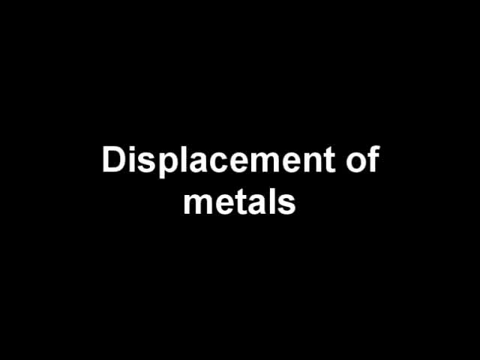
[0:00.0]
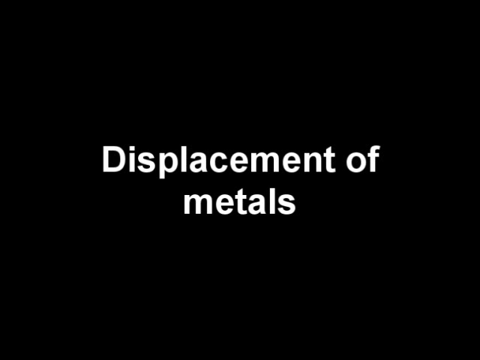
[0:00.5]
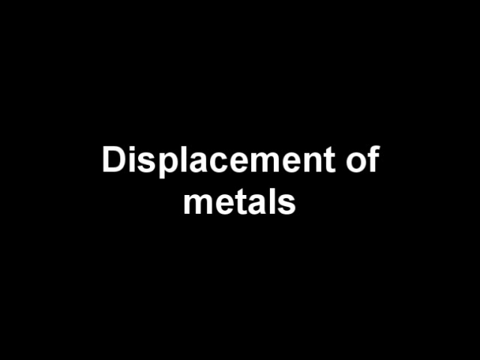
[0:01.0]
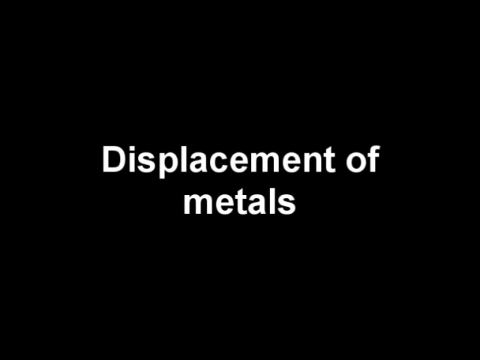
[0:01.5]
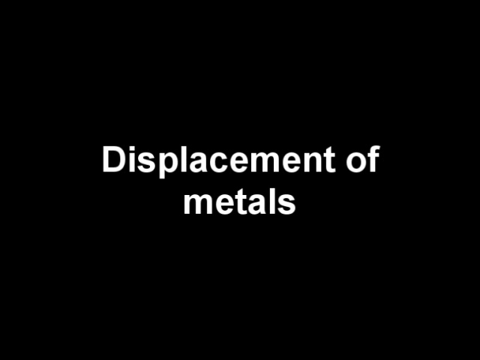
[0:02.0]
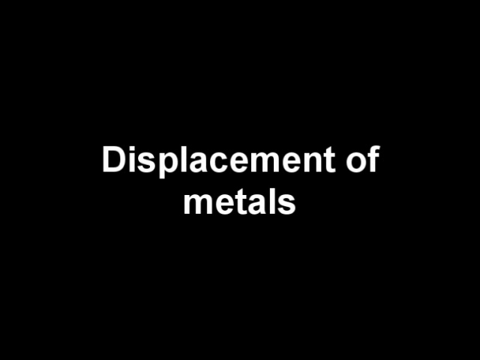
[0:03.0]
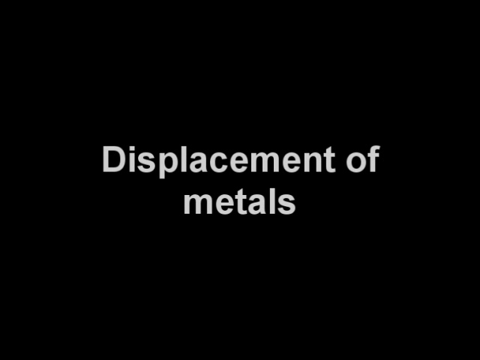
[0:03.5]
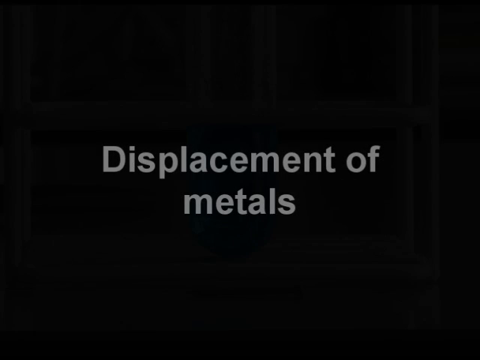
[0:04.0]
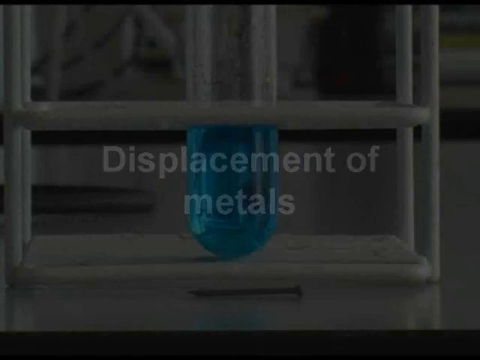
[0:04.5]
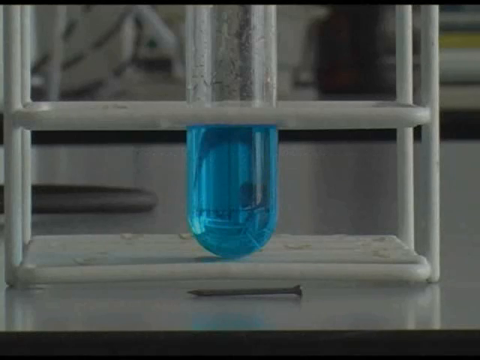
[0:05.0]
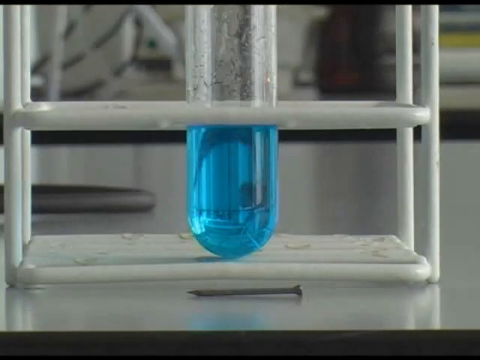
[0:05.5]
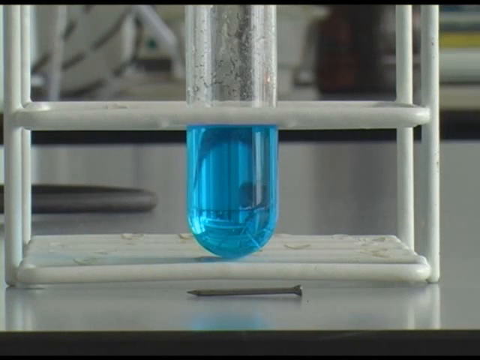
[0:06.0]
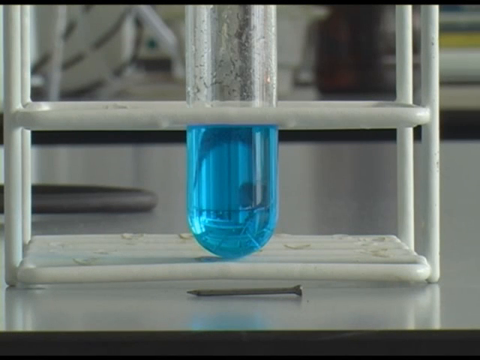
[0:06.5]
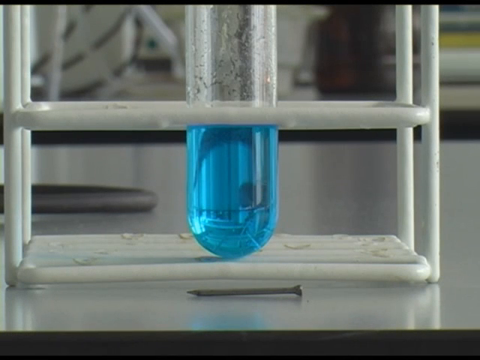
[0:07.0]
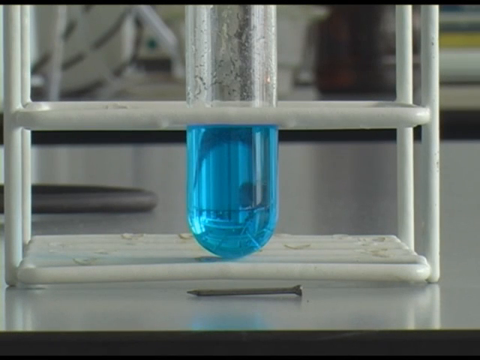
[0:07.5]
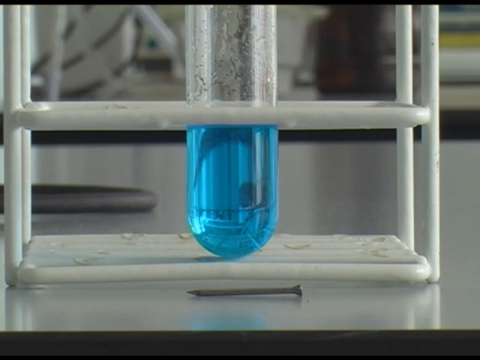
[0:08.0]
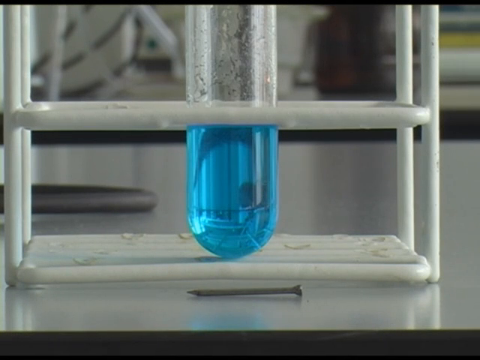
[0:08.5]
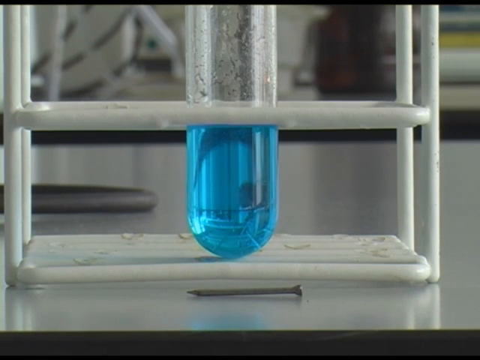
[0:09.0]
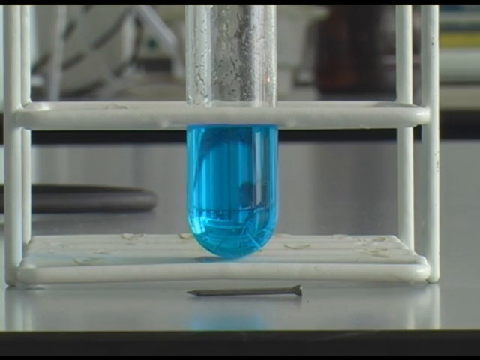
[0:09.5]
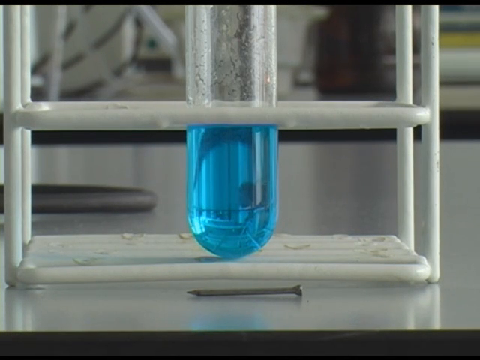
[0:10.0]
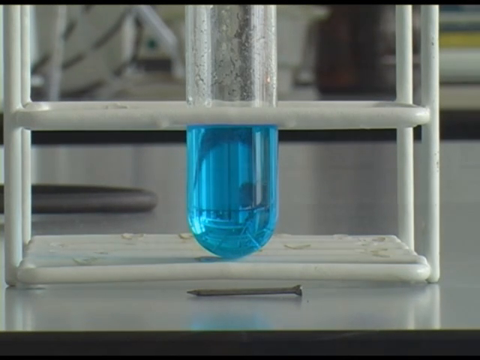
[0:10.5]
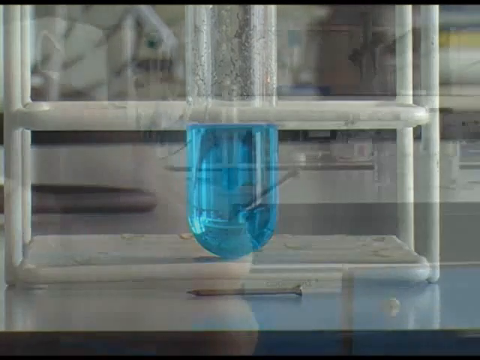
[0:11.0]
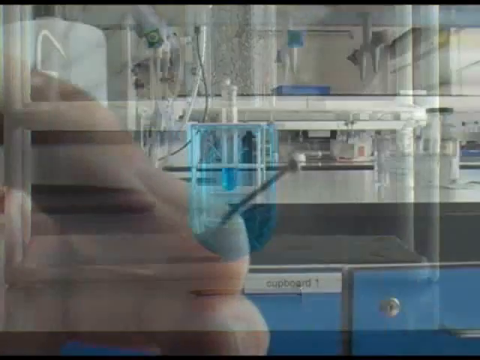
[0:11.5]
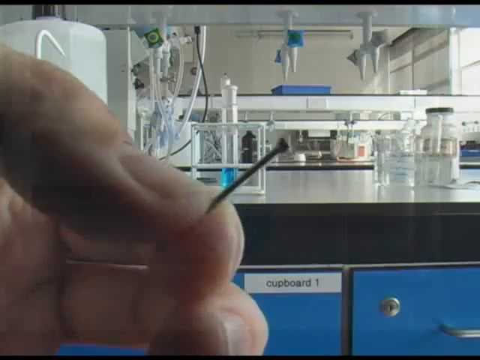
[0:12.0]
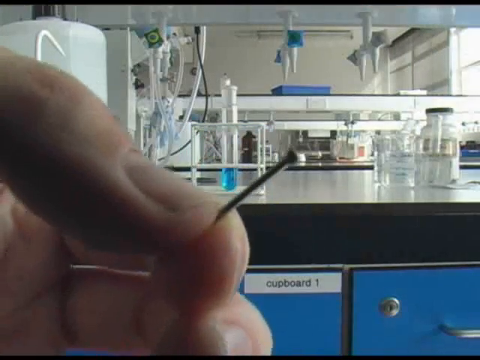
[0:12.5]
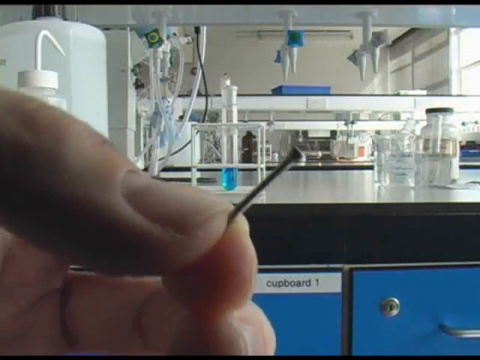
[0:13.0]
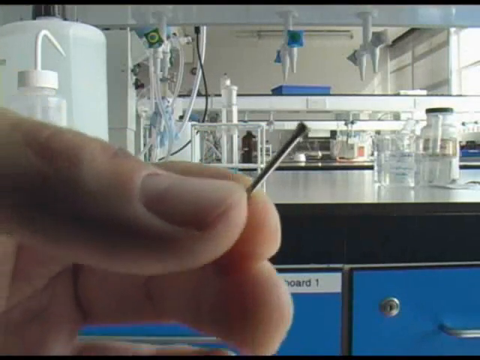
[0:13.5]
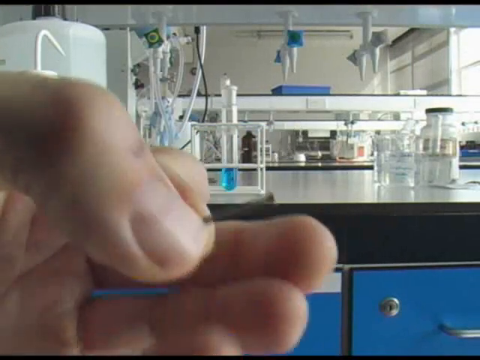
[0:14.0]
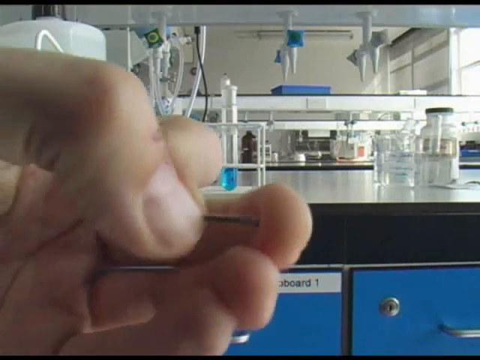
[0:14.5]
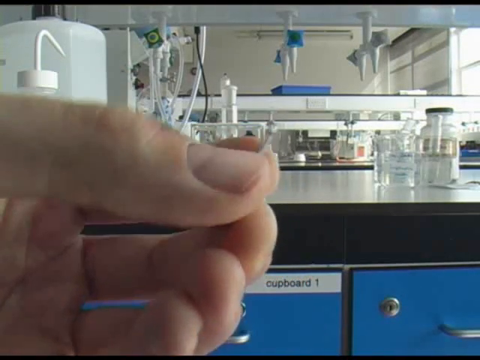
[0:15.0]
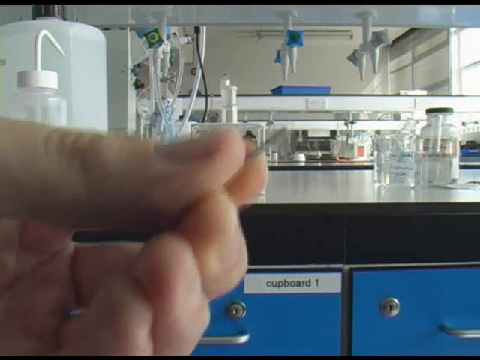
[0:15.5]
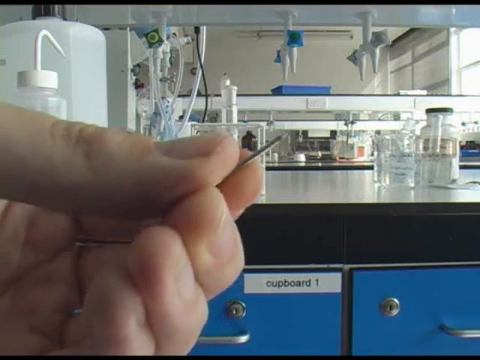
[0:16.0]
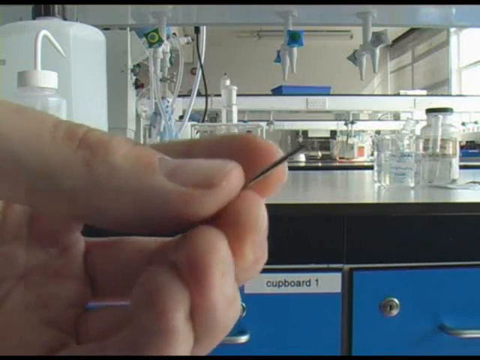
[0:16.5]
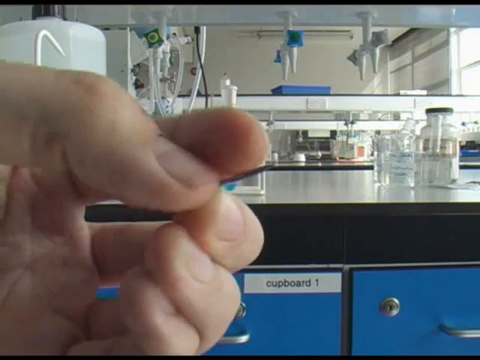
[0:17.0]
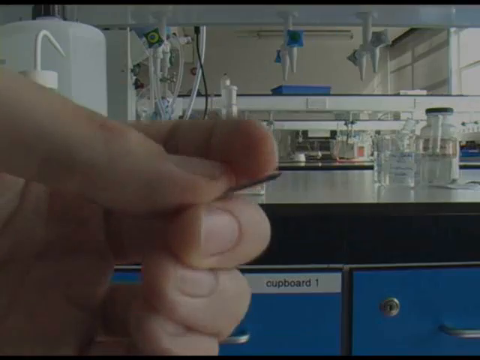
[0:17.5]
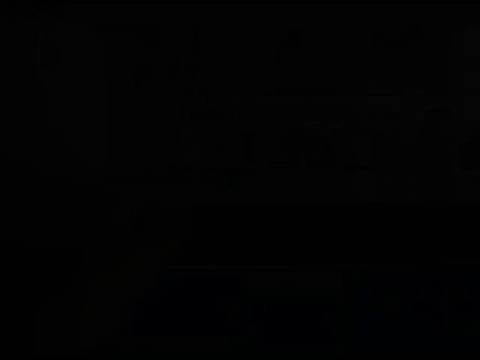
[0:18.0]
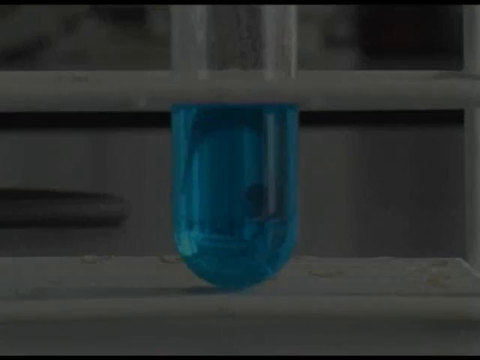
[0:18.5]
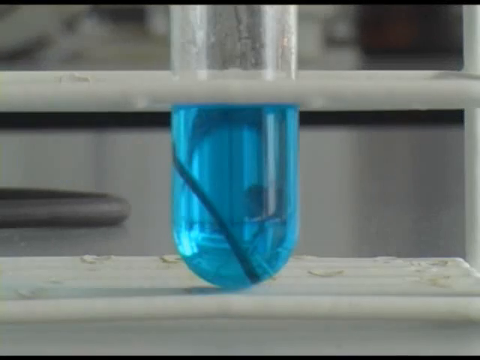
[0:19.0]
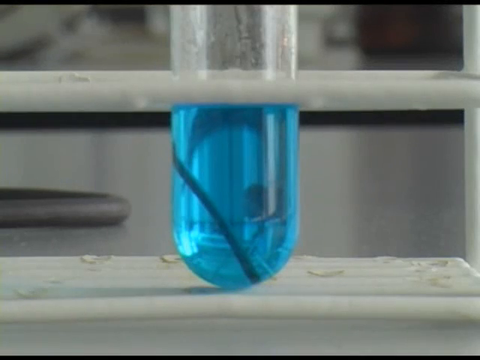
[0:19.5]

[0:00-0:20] The slide starts off as a solid black background with no ombre effect. In the middle of the slide, bold white letters say "displacement of metals". The slide then switches to some sort of tube that looks like a bottle, with blue liquid at the very bottom. The setting seems to be some kind of lab. A nail is on the counter, and then a man grabs the nail off the counter and holds it up in his fingers. Lab materials are in the background, including something labeled "cupboard". Then there is another close-up of the blue liquid inside what appears to be some kind of testing tube. The cabinets below are blue.